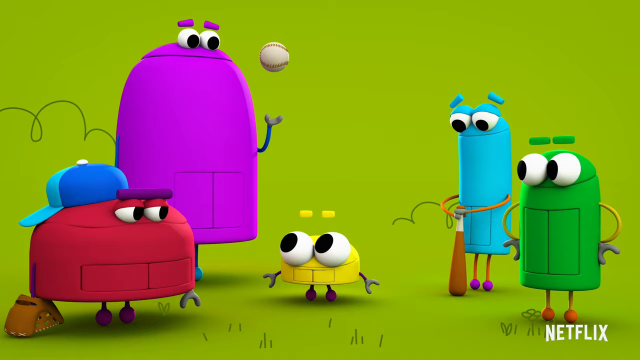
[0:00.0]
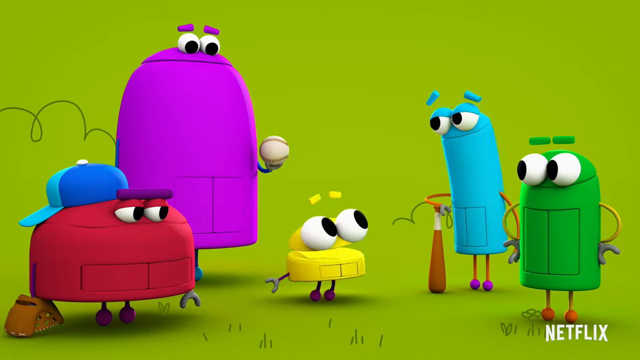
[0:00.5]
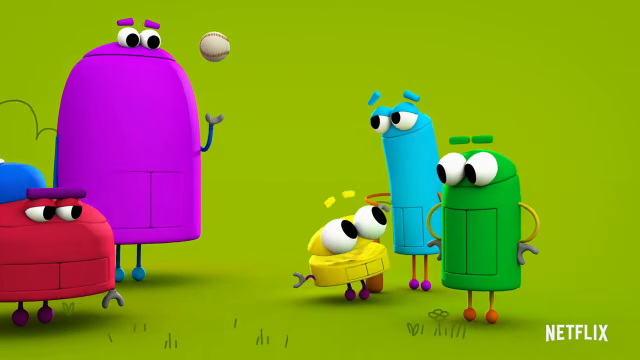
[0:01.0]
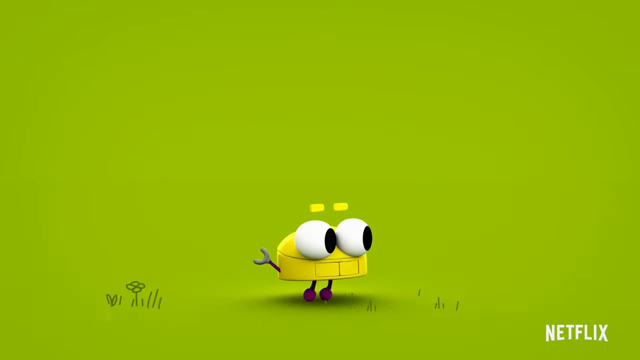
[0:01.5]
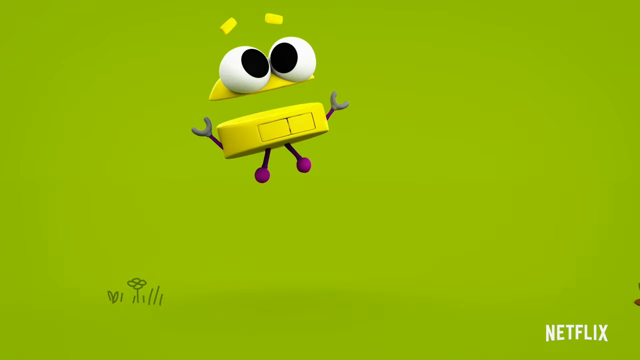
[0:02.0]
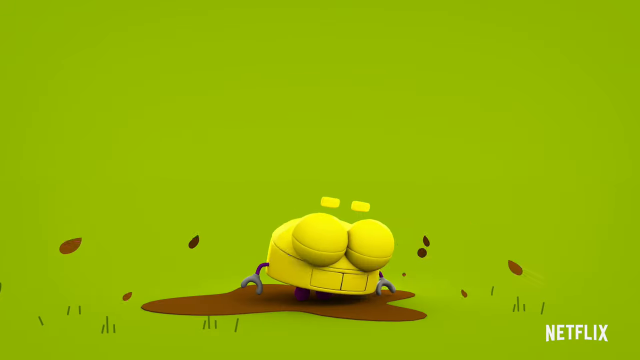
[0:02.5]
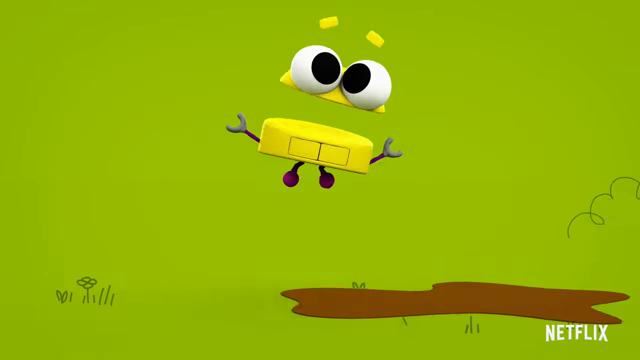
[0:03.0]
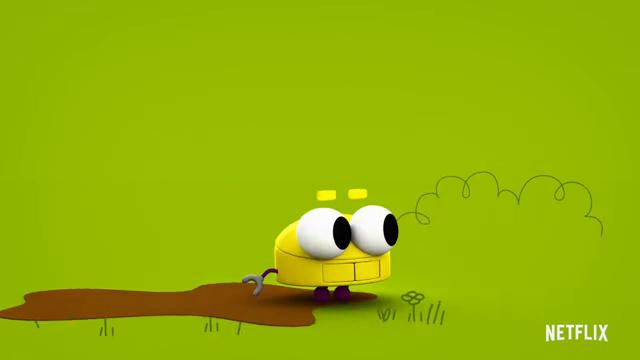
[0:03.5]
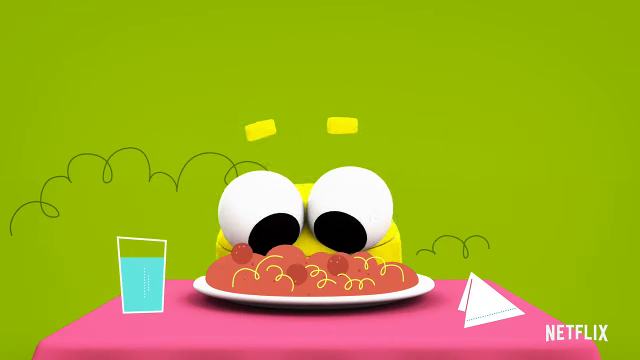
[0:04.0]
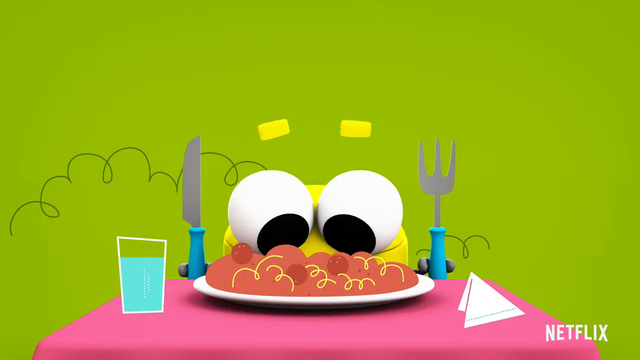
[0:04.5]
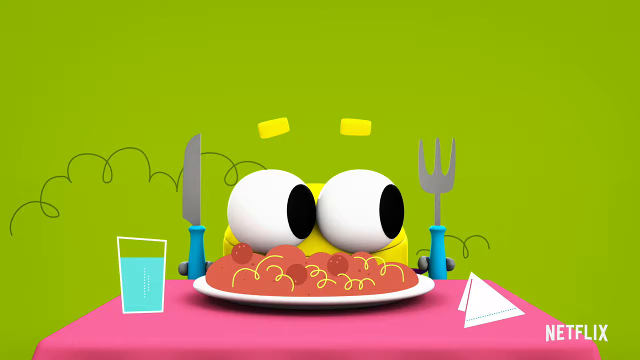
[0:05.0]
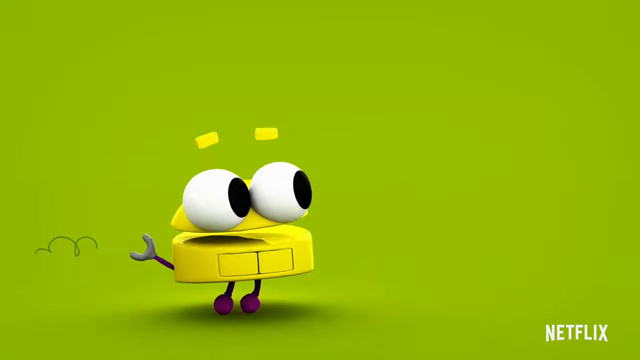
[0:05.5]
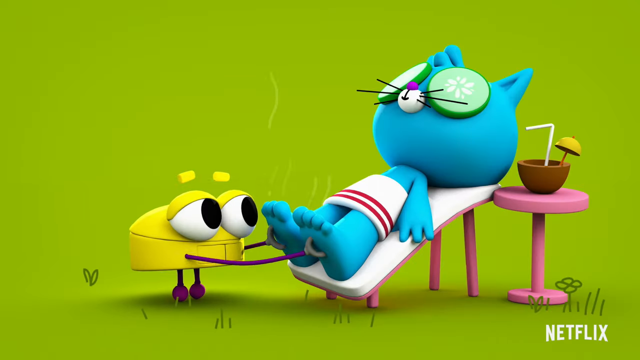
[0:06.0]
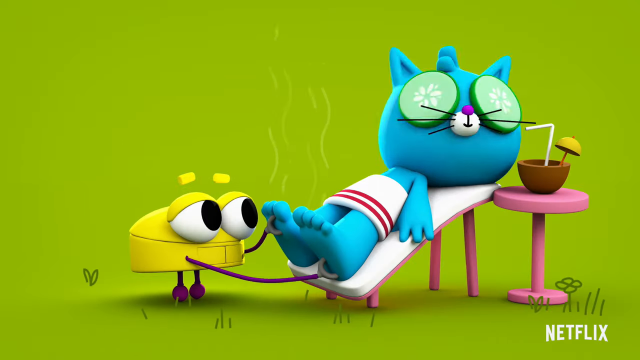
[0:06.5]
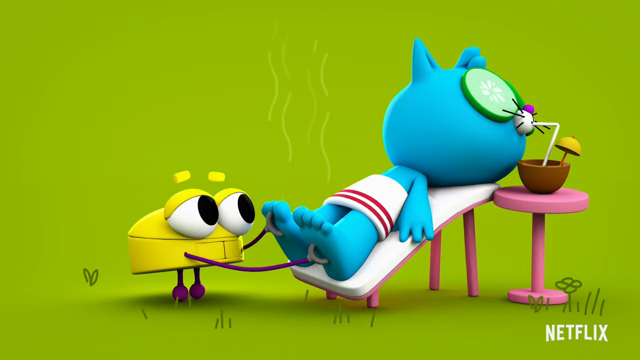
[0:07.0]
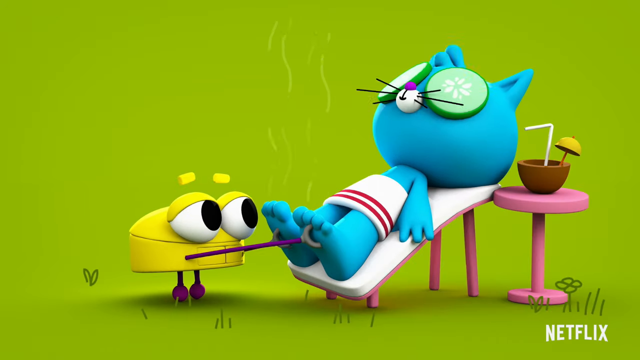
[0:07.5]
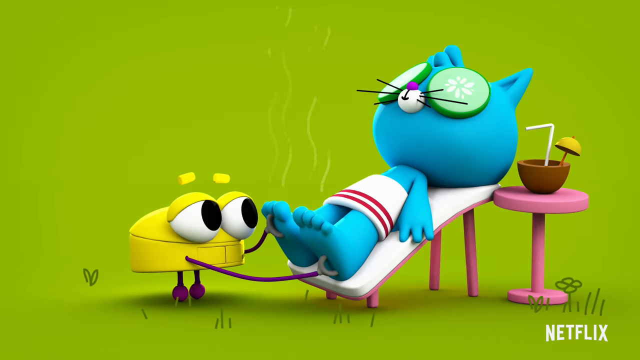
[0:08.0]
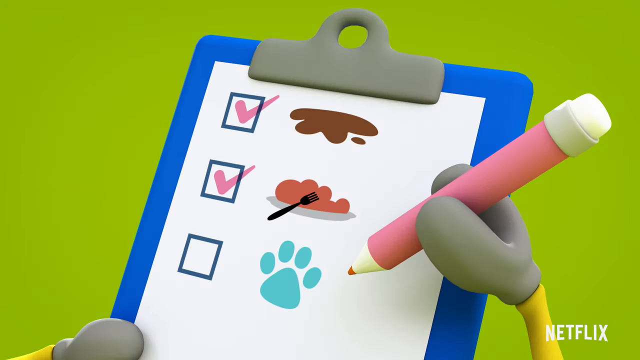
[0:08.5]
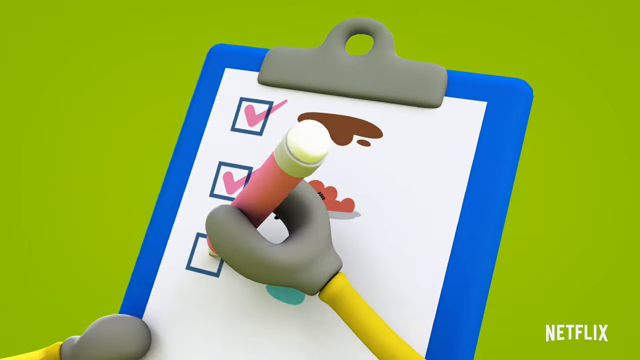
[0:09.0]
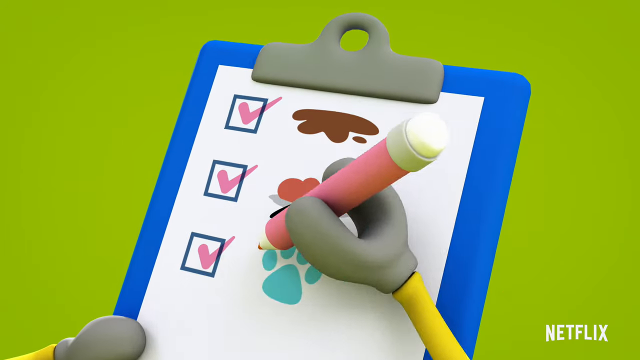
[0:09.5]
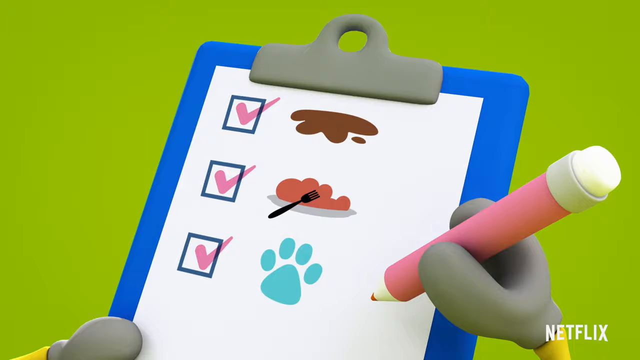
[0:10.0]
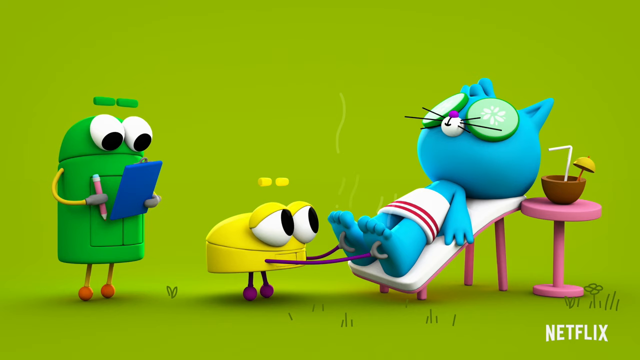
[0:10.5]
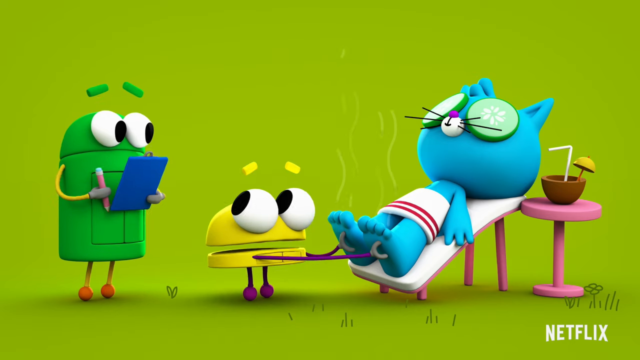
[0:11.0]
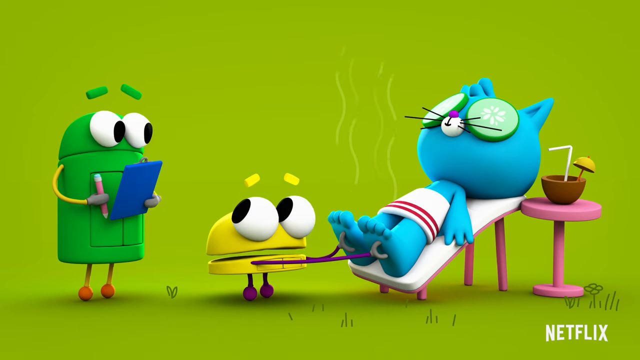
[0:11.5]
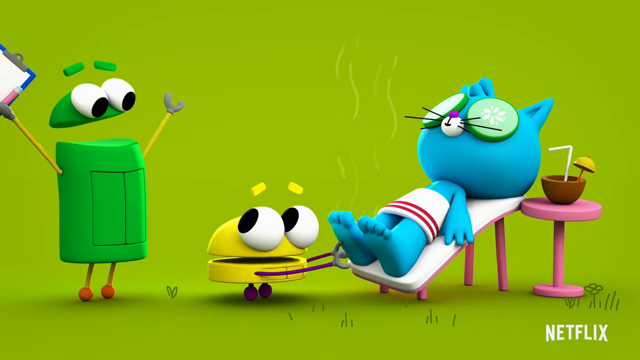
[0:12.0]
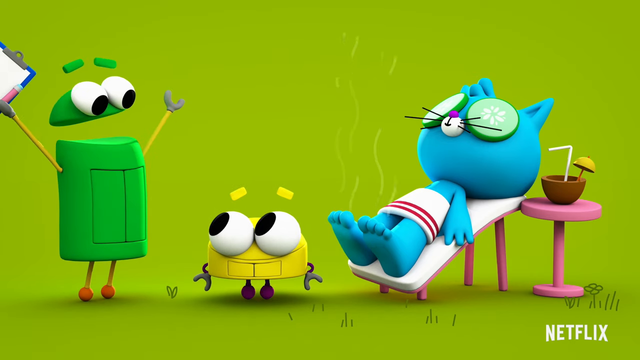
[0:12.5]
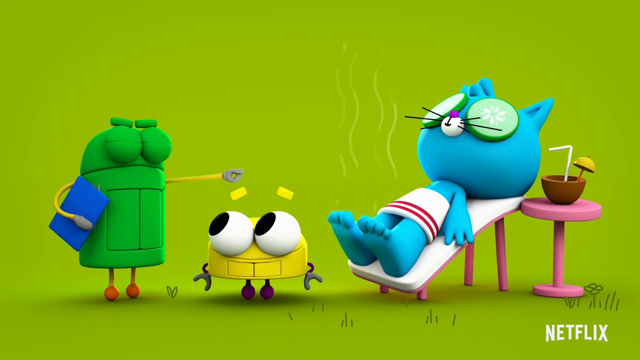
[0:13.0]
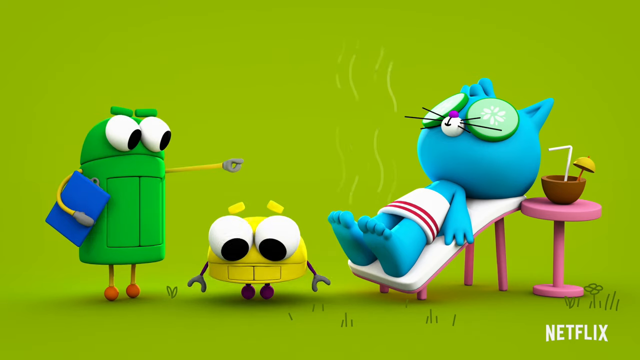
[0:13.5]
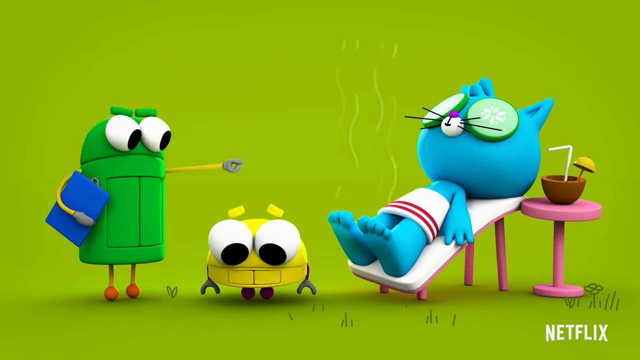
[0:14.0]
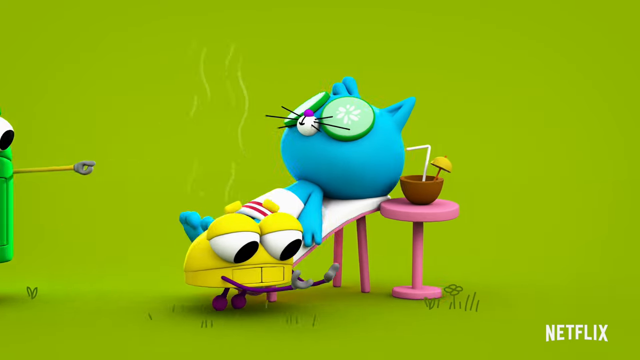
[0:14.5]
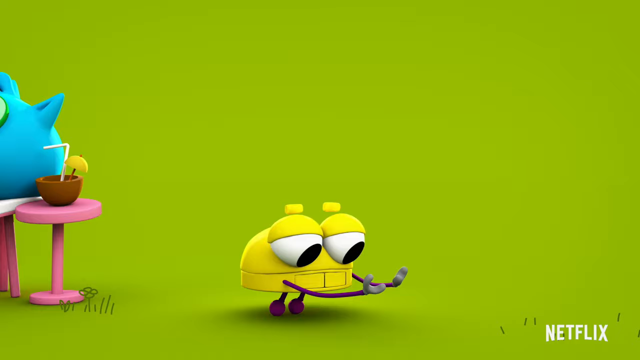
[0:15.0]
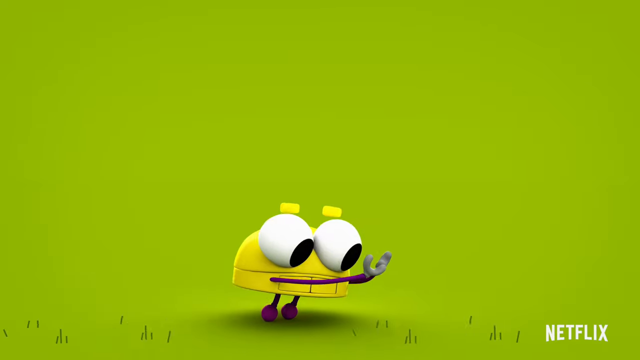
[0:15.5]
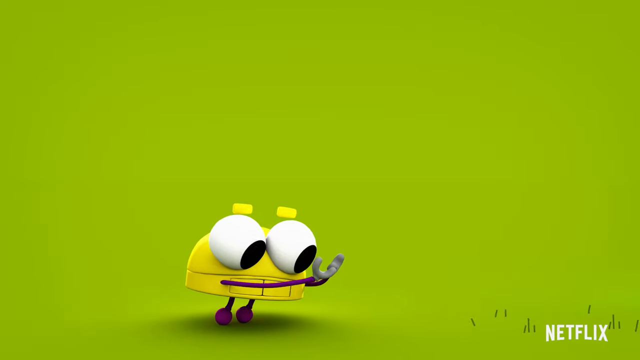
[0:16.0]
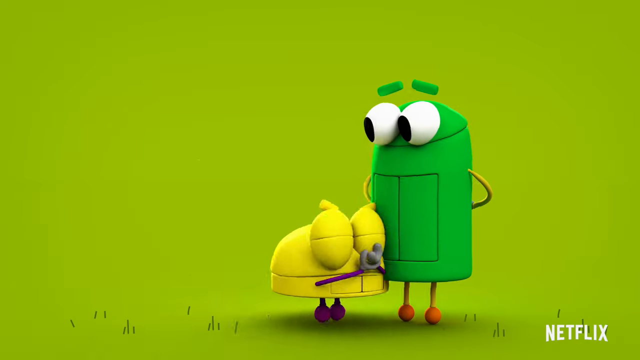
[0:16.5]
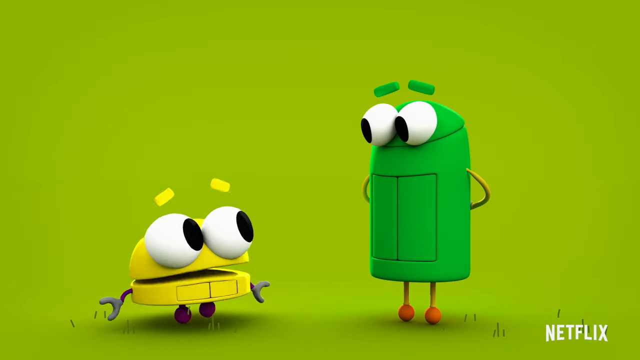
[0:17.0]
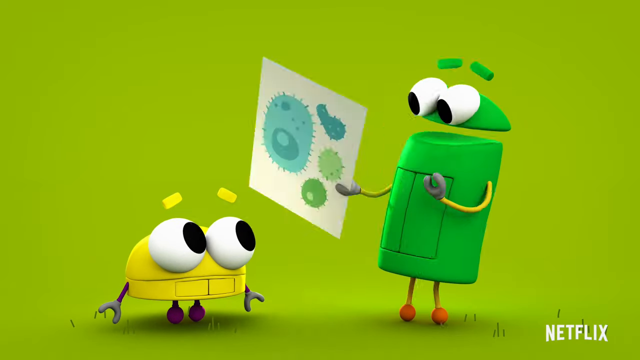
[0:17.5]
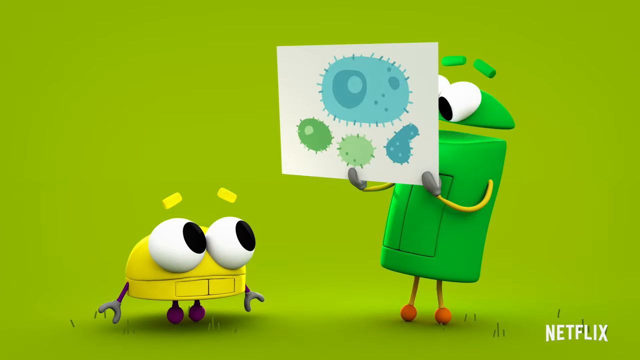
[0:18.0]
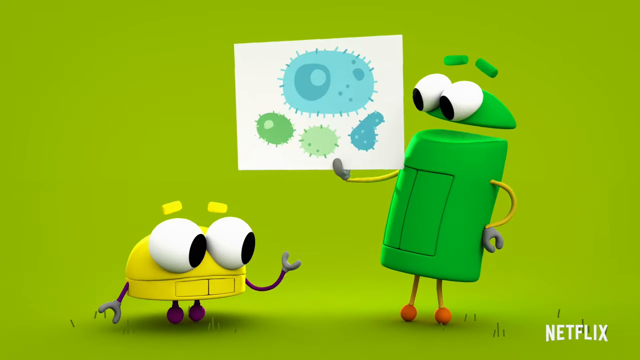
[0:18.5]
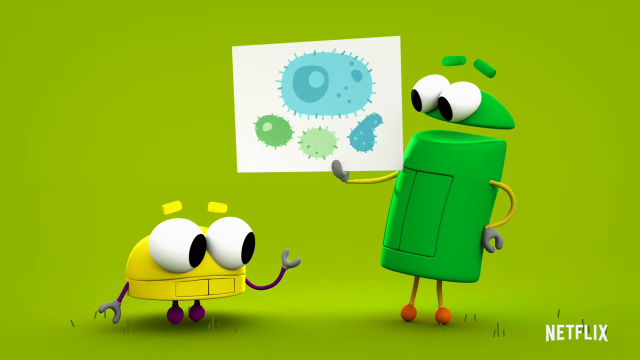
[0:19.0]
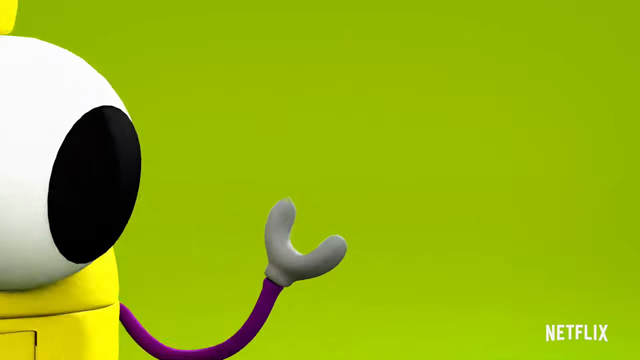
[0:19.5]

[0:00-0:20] Against a lime-green background, five dome-shaped characters of varying widths and heights are standing around. The first is red with a blue hat and some kind of catcher's glove. The second is purple, very tall and large, about twice as tall as the red one, with a baseball in his left hand. In the middle is a very small yellow one with big eyes. To its right is a slender blue one, about five times the height of the yellow one and the same width, holding a baseball bat turned downward. On the far right is a green one with its hands on its hips. They all have little stick legs with balls at the ends. The camera pans right as the yellow one runs, kind of wheeling over, jumps and lands in a puddle of mud, then jumps and lands in another puddle of mud. It stops at a plate of spaghetti sitting on a table, with a glass of water to the left and a folded napkin to the right. The yellow creature holds up a knife in its right hand and a fork in its left, looks down, then briefly looks to the right. The camera pans right to a blue cat reclining on a slanted bed, with bare feet, a towel around its midriff and cucumber slices on its eyes. Next to it is a pink round table holding a coconut with a straw and a novelty umbrella coming out of it. Lines come out of the cat's feet, indicating that they smell. The yellow creature comes over and, like, tickles and massages the cat's feet, which makes the cat's head kind of move around and twitch a bit. A blue clipboard is then shown with a paper clipped to it bearing a checklist: the first checked box has a puddle of mud next to it, the second a plate of spaghetti, and the third, in the process of being checked, a blue paw print; the creature's little hand checks it off with a pink marker. To the left appears the green creature, which was actually holding the clipboard. The yellow one looks back at the green creature in concern. The green creature puts both arms in the air, the top half of it, the "head" area, kind of comes apart slightly, and it angrily points to the cat. The yellow creature wheels off to the right as the camera pans with it, holding up its arms and looking at its hands, then looking closer at them. The green creature appears to the right; the yellow creature bumps into it and wheels back slightly. The green creature holds up a white placard with four different types of bacteria on it. The yellow creature holds up its hand, and the view zooms in to show a bunch of bacteria.